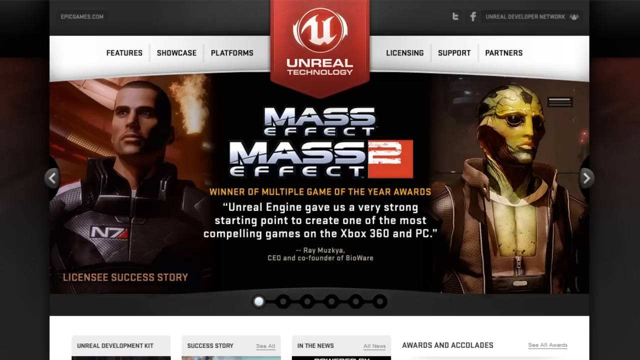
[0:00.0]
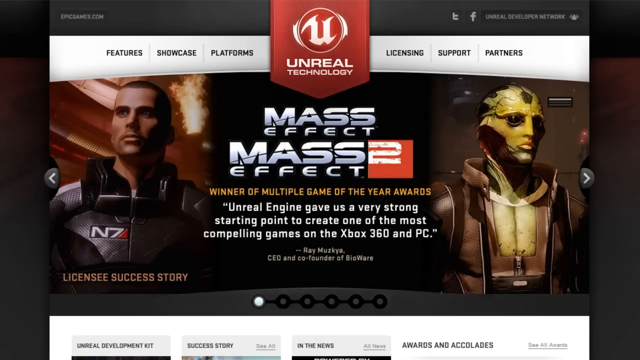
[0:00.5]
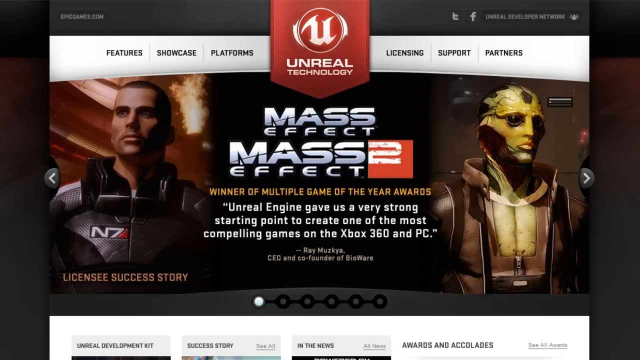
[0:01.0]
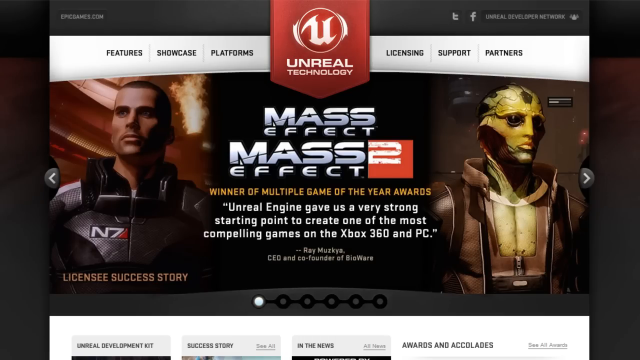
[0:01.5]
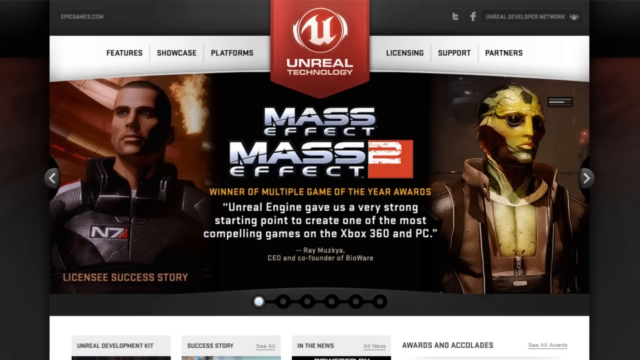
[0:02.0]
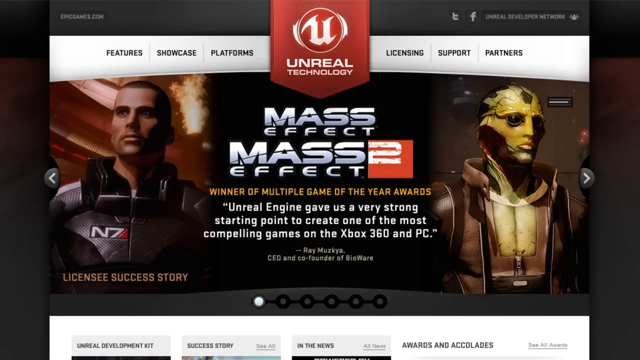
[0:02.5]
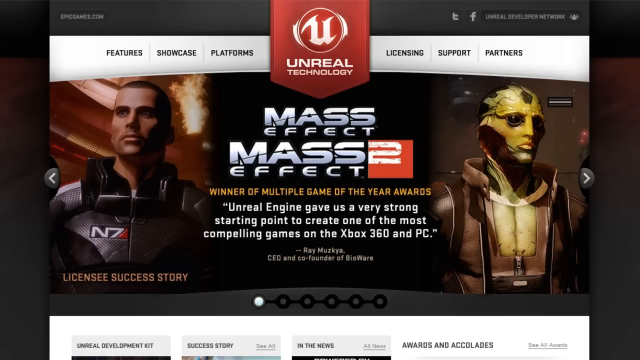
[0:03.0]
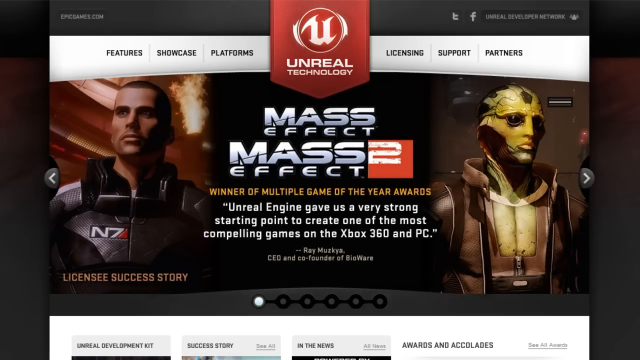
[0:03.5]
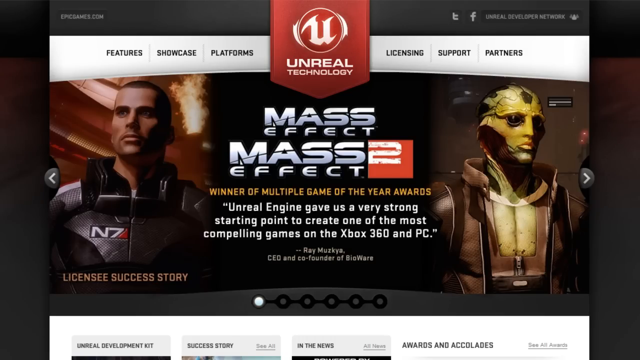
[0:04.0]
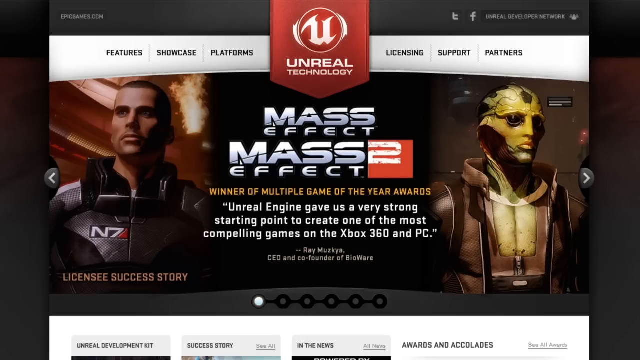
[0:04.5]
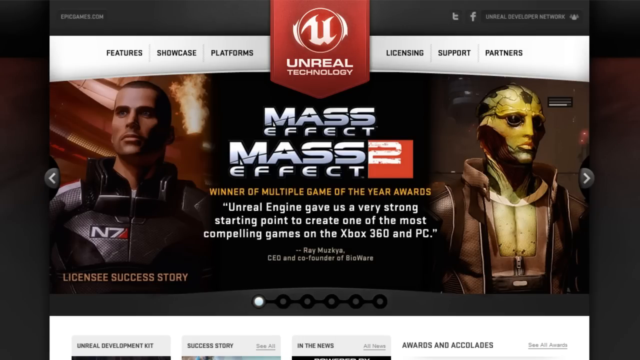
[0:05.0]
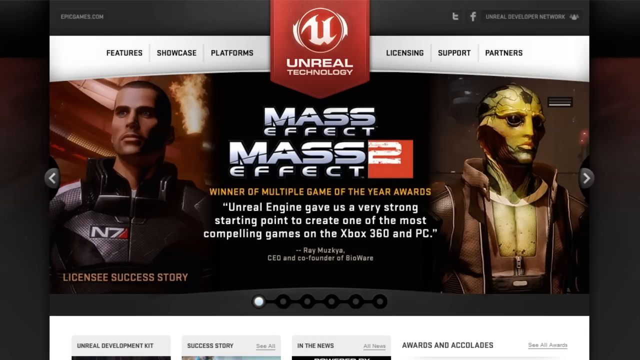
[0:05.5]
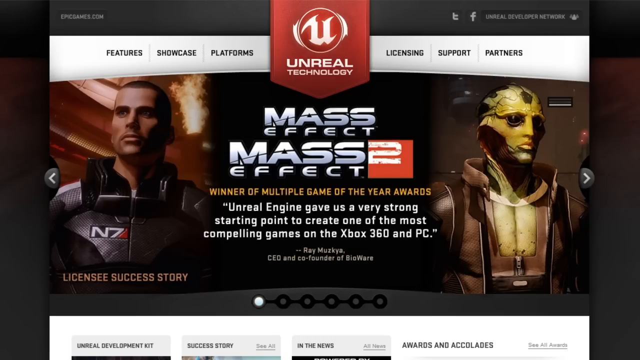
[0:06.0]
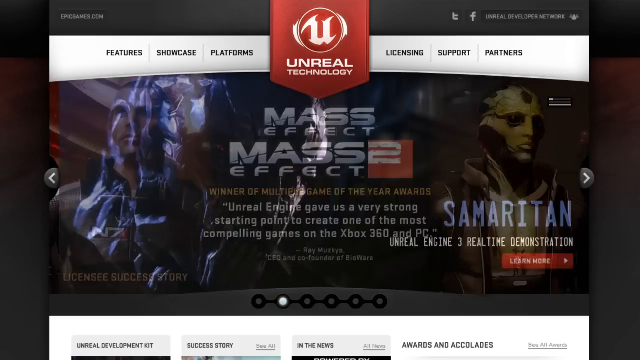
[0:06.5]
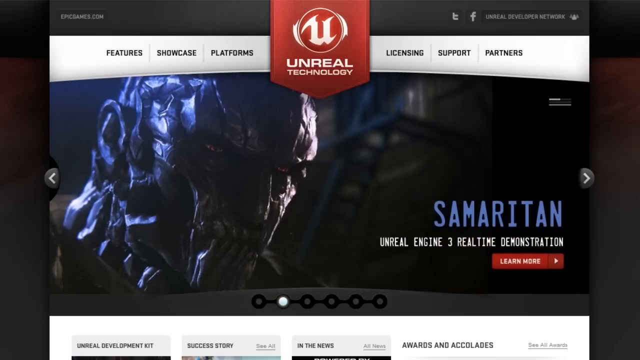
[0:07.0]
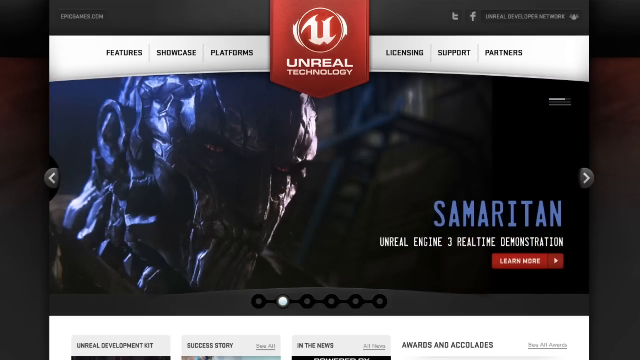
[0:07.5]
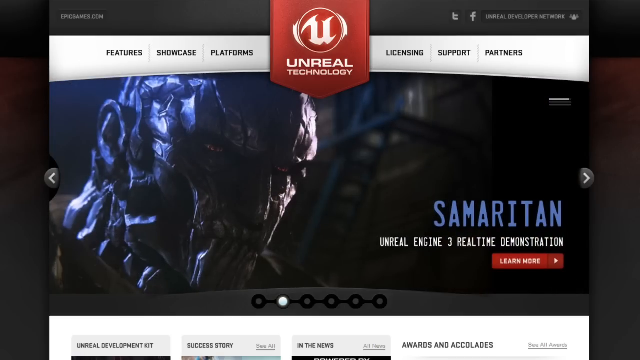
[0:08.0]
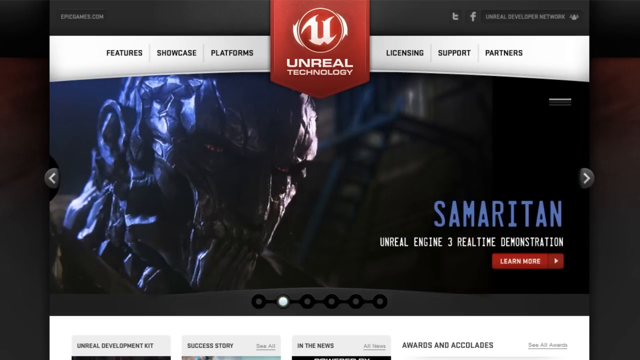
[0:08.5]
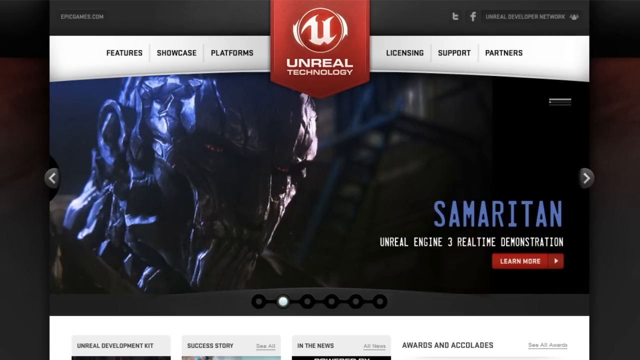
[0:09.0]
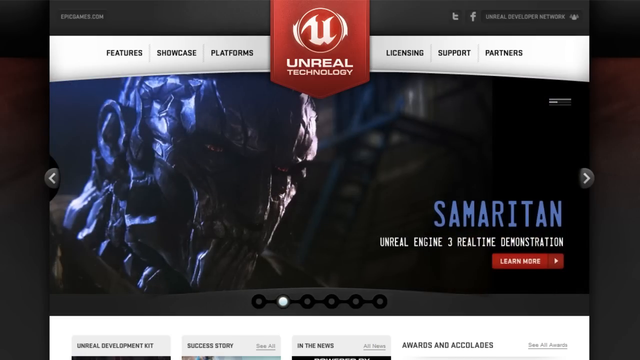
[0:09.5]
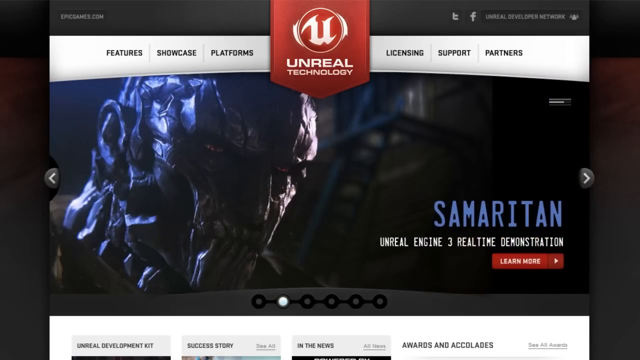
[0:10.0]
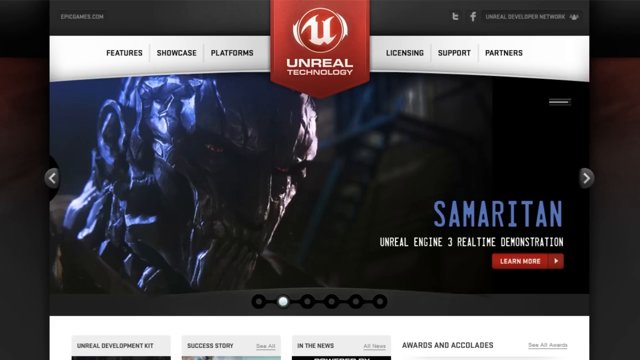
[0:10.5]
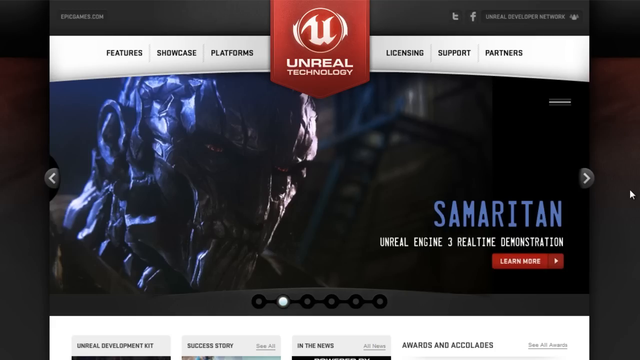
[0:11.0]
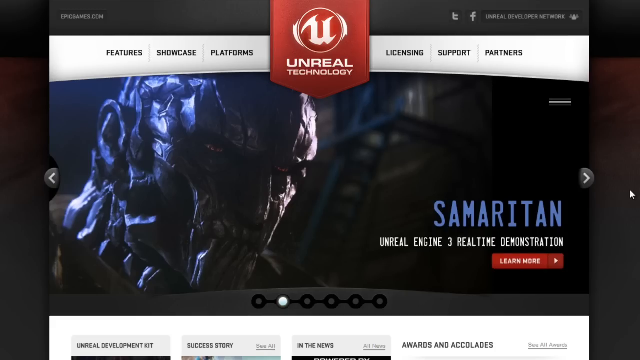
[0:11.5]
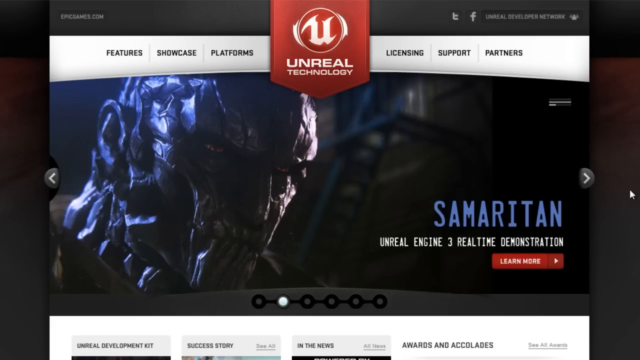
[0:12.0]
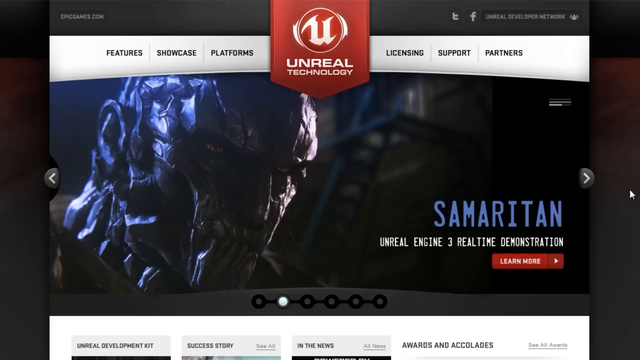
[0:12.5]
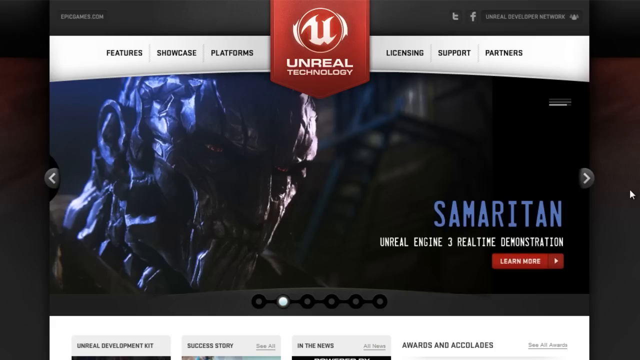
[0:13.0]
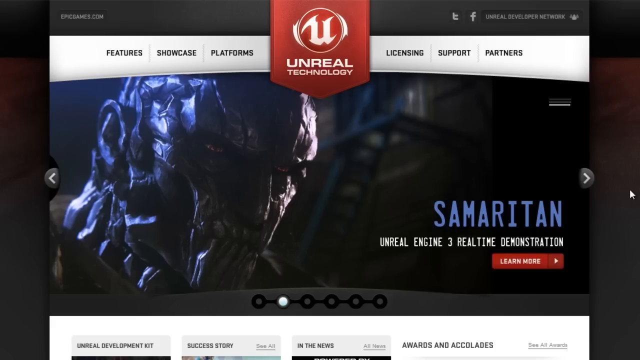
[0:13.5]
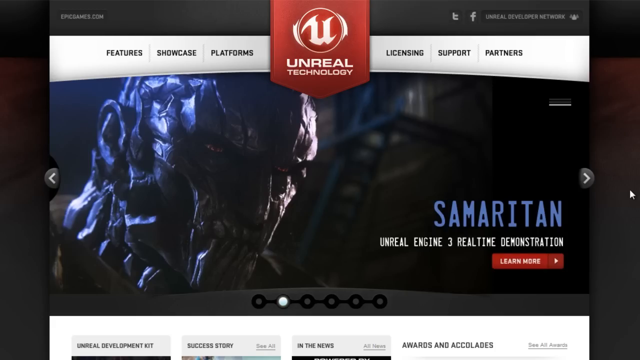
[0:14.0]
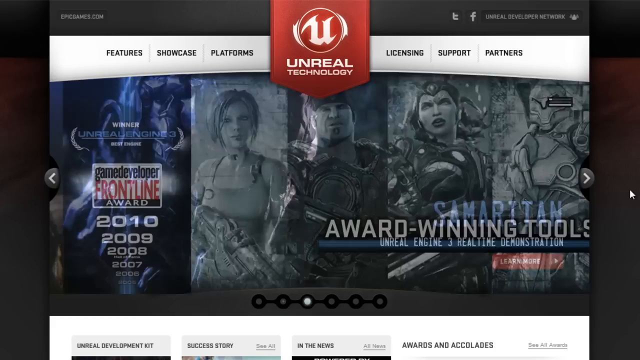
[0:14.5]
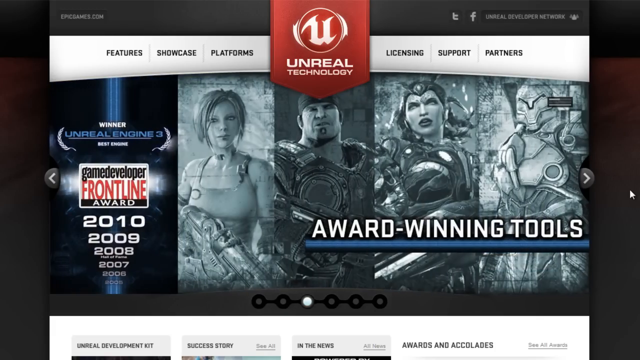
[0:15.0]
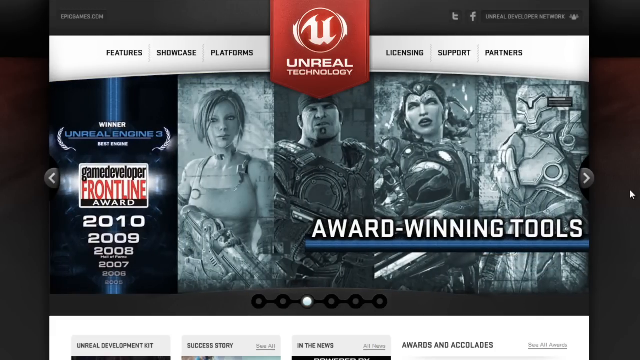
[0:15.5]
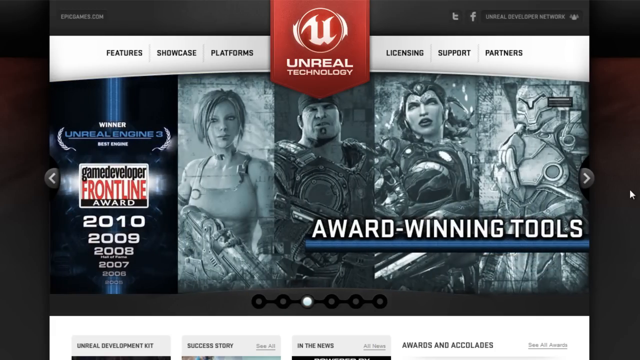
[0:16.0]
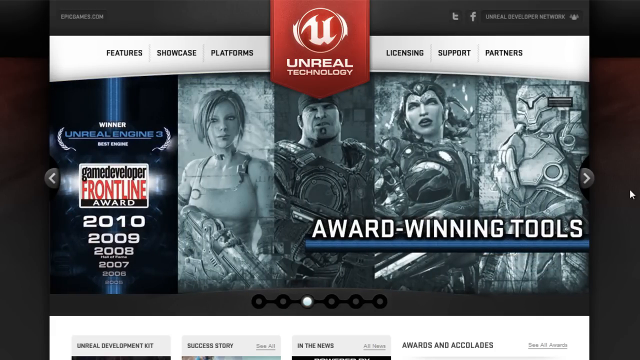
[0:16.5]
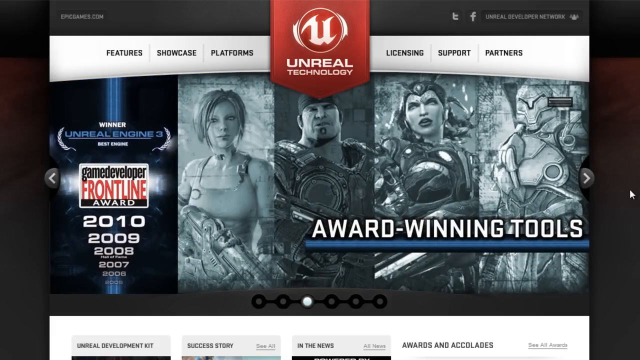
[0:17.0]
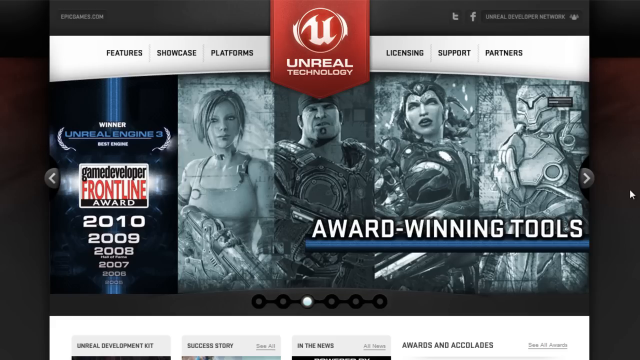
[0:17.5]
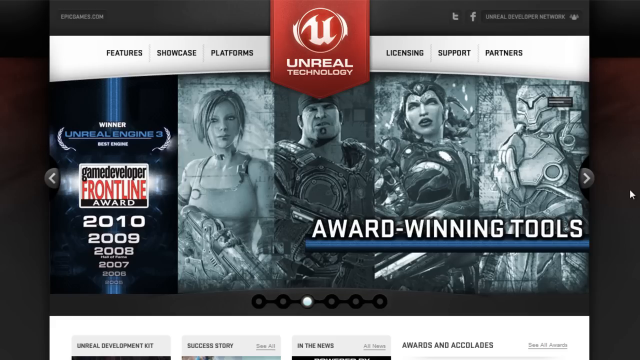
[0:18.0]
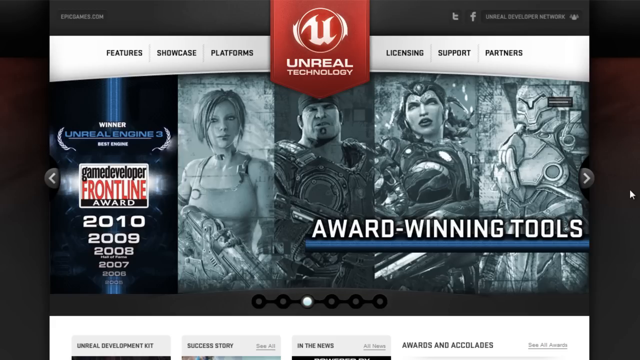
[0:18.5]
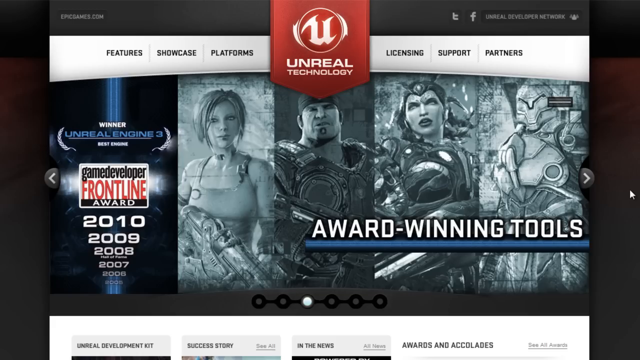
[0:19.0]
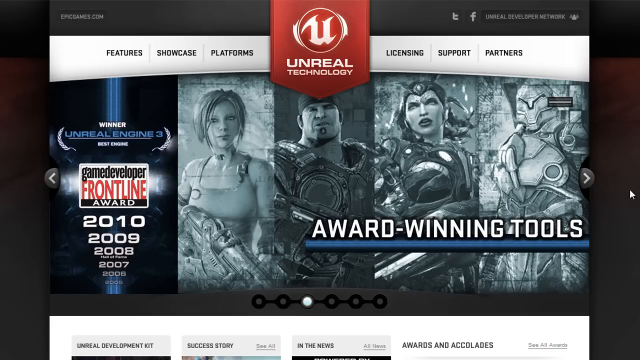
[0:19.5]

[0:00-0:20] A screen recording of a computer screen shows an Unreal Technology webpage with two characters from a television game or PC game on either side: a man on the left and an alien-looking character on the right. In the top middle, "Unreal Technology" appears with a red logo. A game logo follows, reading "Mass Effect" and "Mass Effect 2". Underneath, orange writing says "winner of multiple game of the year awards", and below that white text reads "Unreal Engine gave us a very strong starting point to create one of the most compelling games on the Xbox 360 and the PC". Smaller writing underneath attributes the quote to Ray Musgaia, CEO and co-founder of BioWare. Six tabs at the bottom are scrolled through by the website. It scrolls to the second tab, an advertisement for a game called Samaritan, with white text underneath reading "Unreal Engine 3 real-time demonstration" and red text reading "learn more". The third tab says "award-winning tools" and lists the awards it has won on the left.